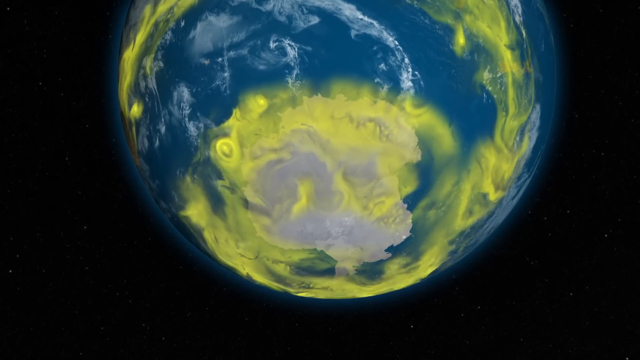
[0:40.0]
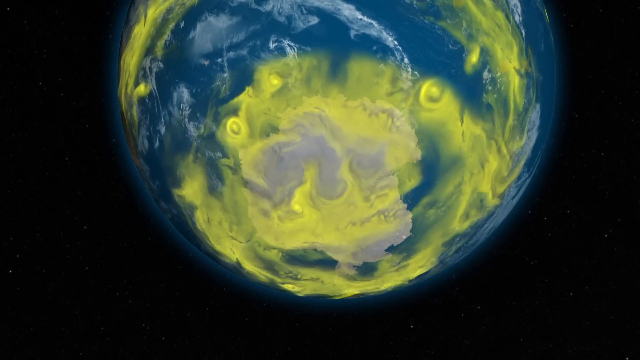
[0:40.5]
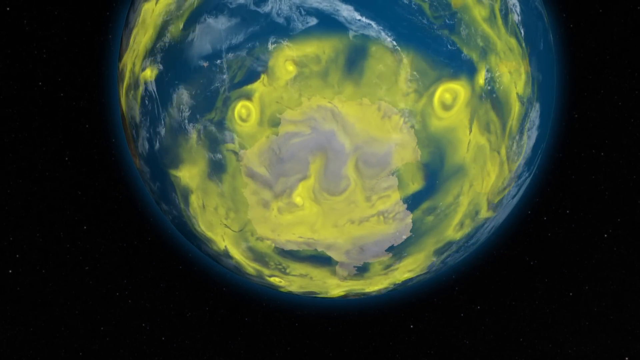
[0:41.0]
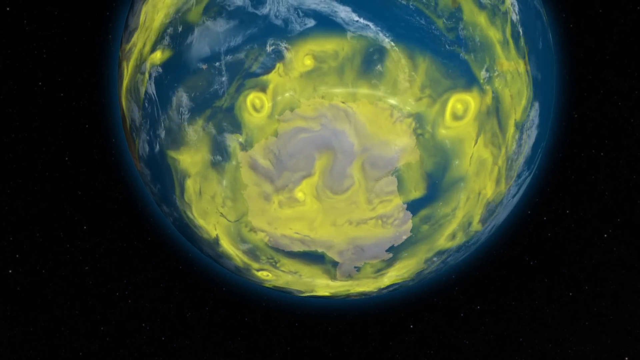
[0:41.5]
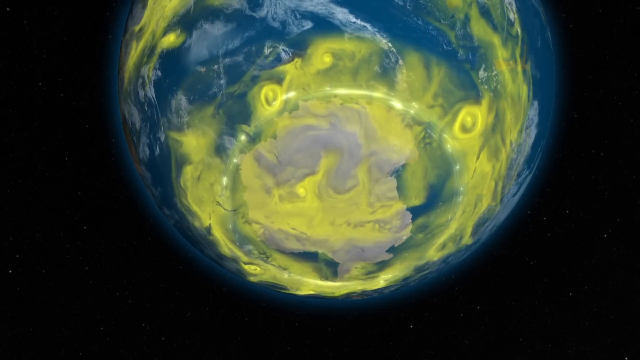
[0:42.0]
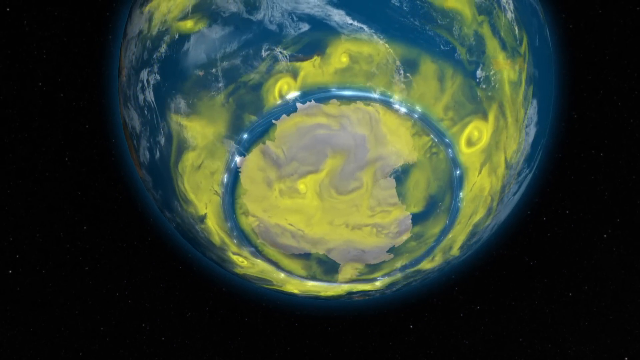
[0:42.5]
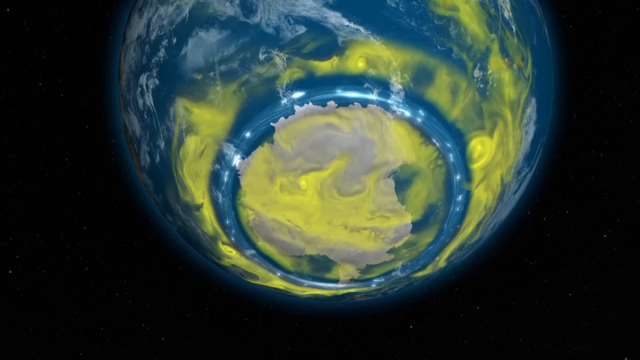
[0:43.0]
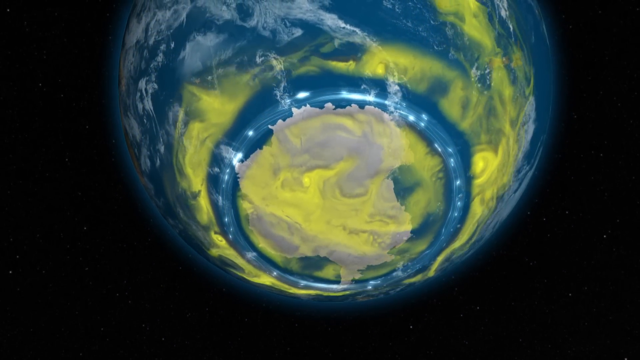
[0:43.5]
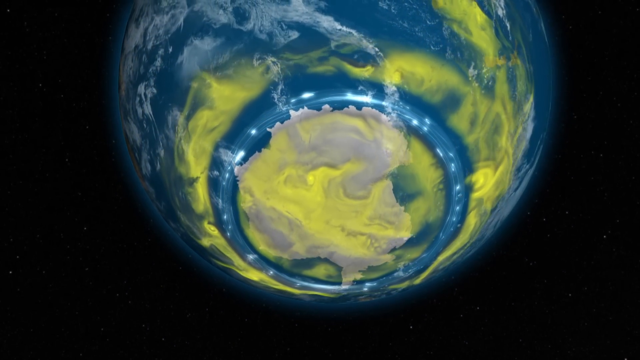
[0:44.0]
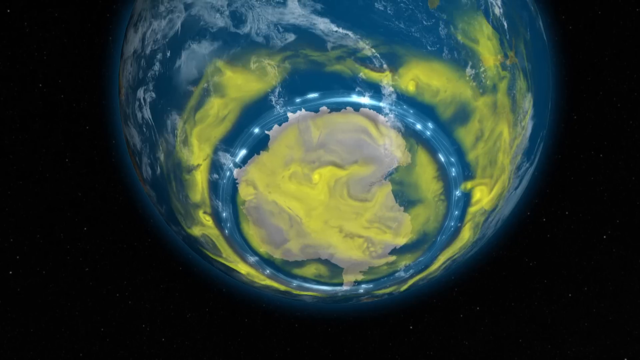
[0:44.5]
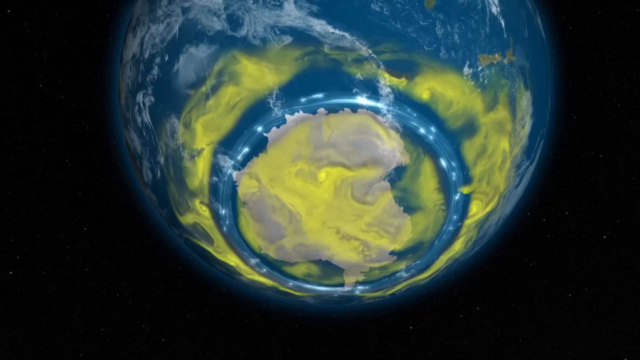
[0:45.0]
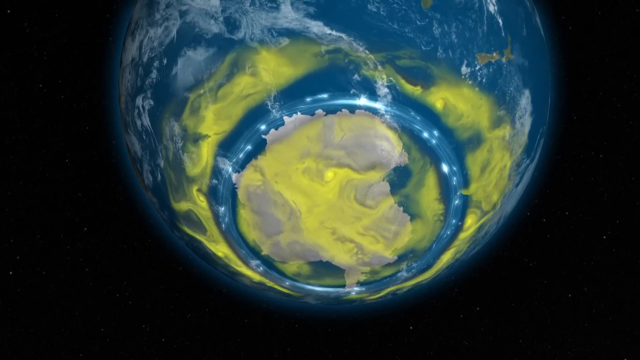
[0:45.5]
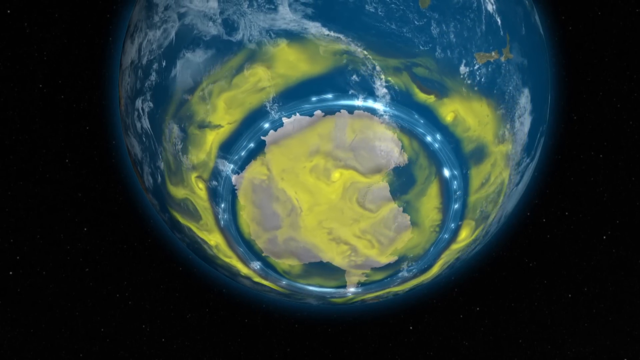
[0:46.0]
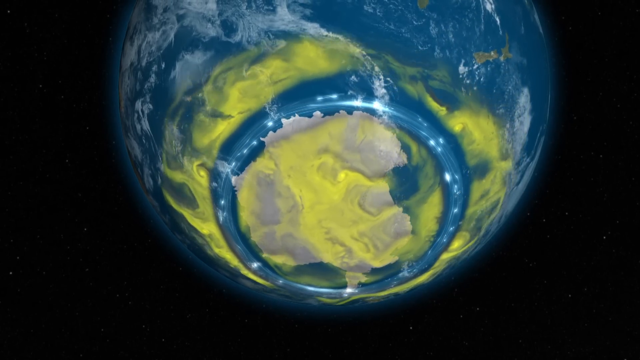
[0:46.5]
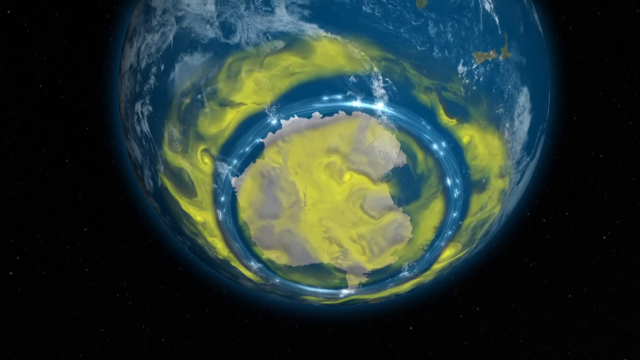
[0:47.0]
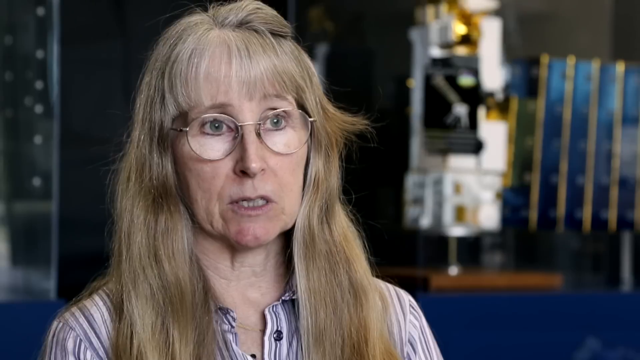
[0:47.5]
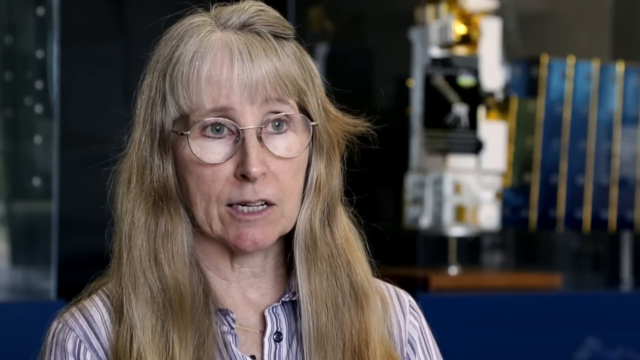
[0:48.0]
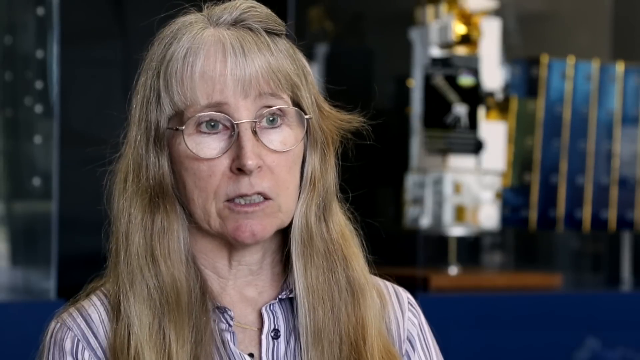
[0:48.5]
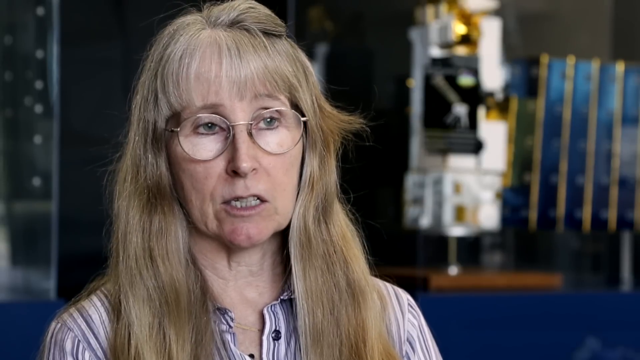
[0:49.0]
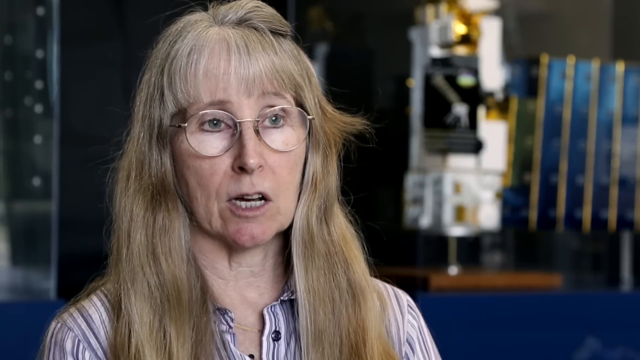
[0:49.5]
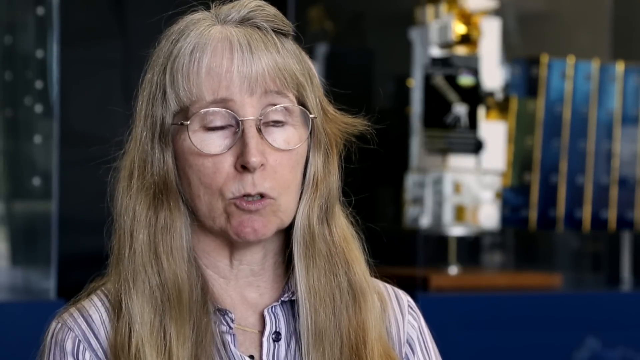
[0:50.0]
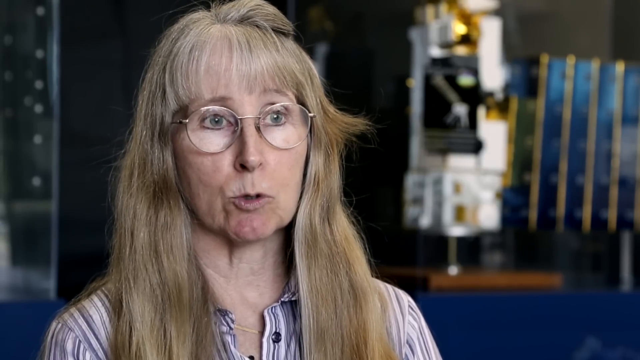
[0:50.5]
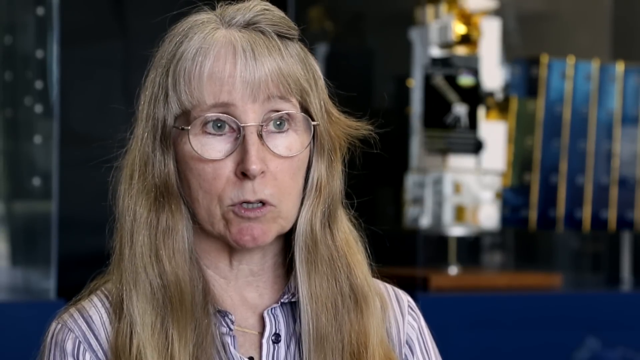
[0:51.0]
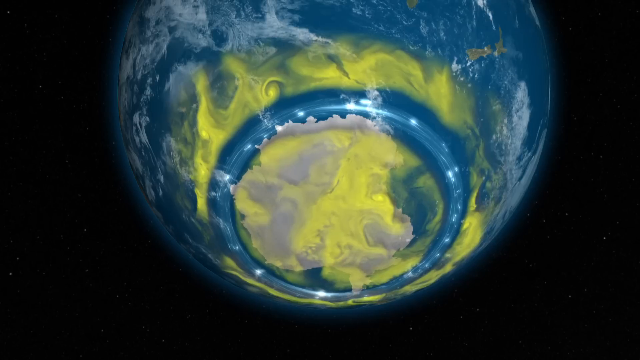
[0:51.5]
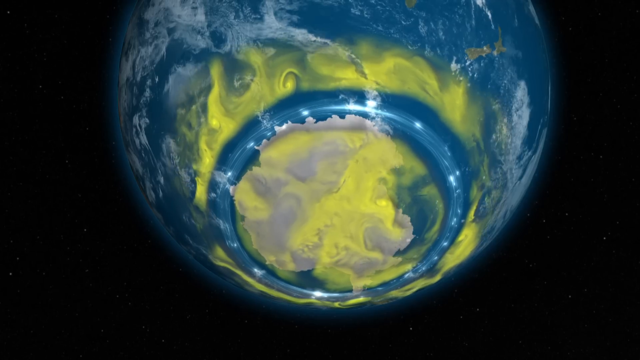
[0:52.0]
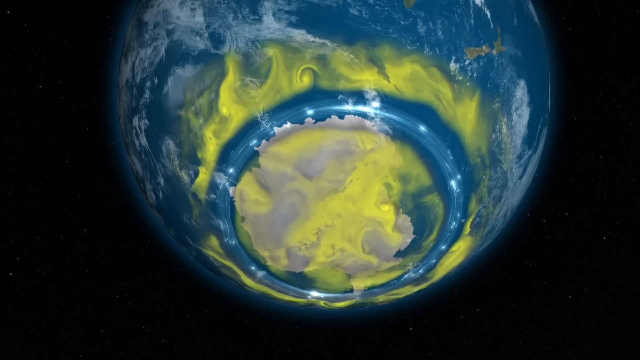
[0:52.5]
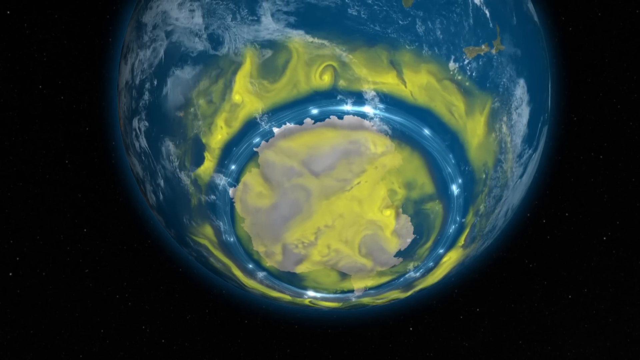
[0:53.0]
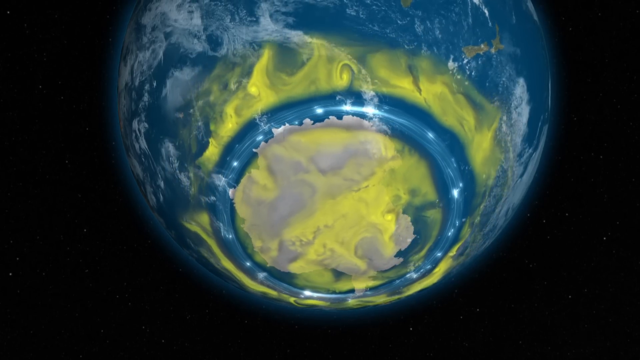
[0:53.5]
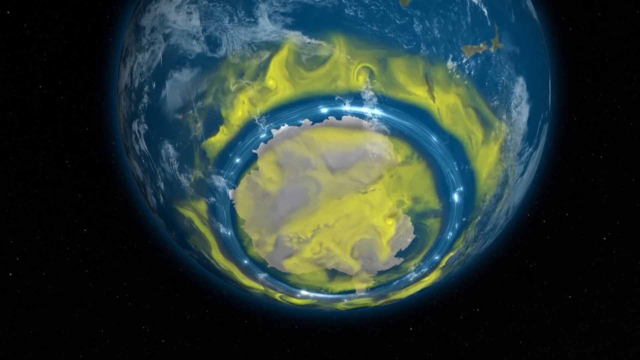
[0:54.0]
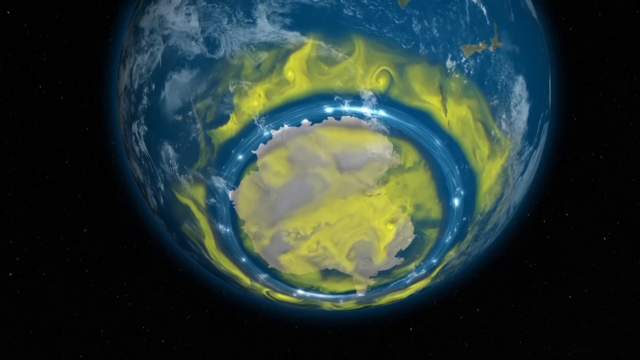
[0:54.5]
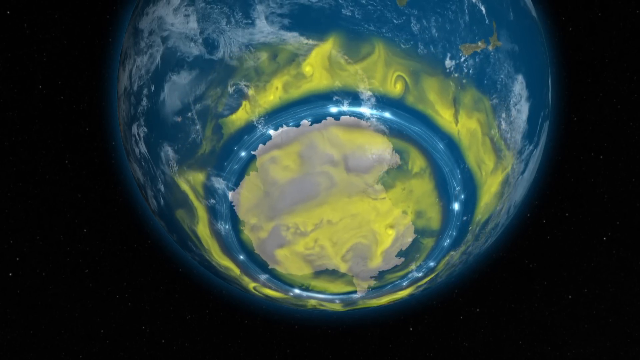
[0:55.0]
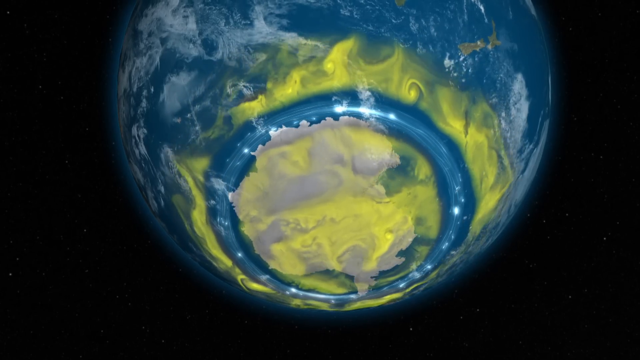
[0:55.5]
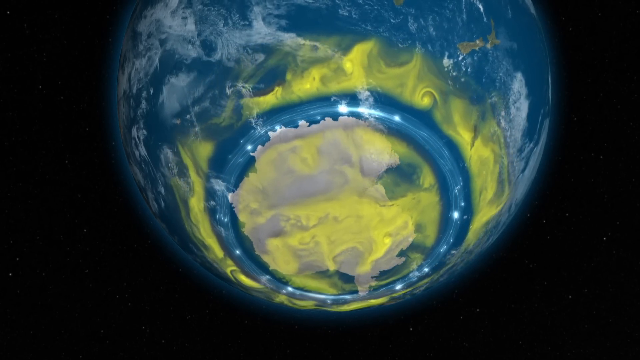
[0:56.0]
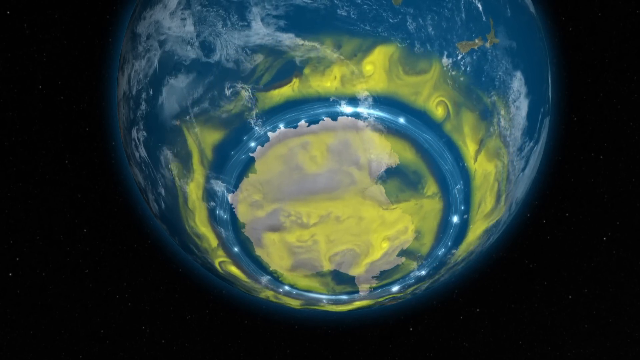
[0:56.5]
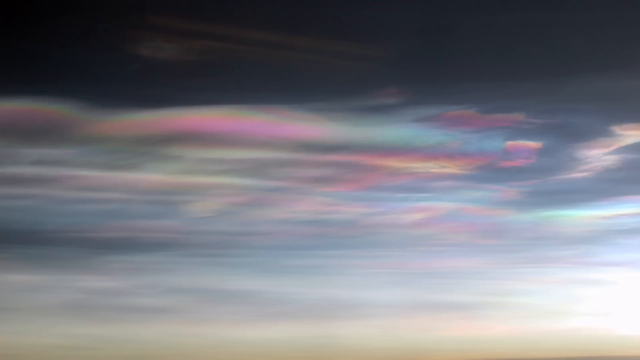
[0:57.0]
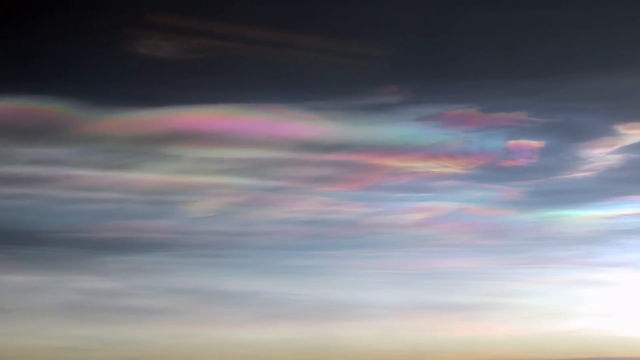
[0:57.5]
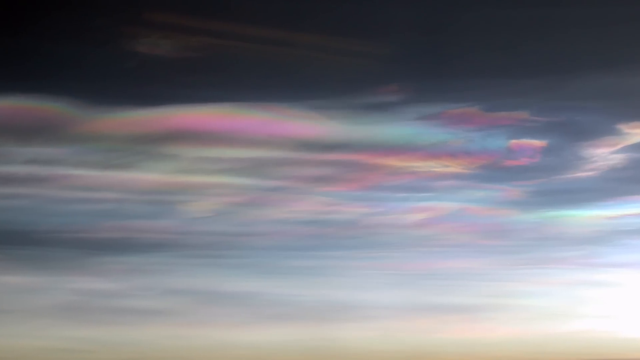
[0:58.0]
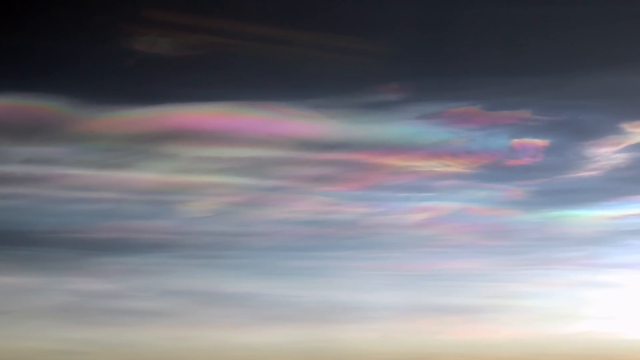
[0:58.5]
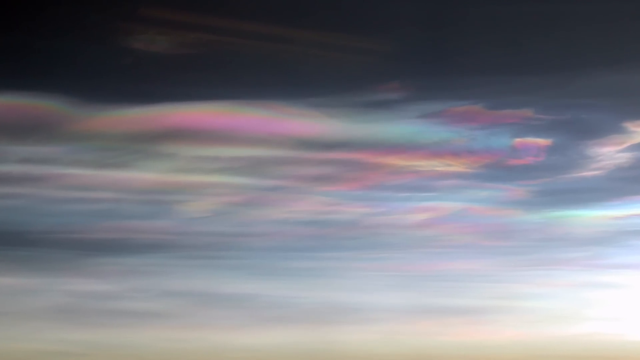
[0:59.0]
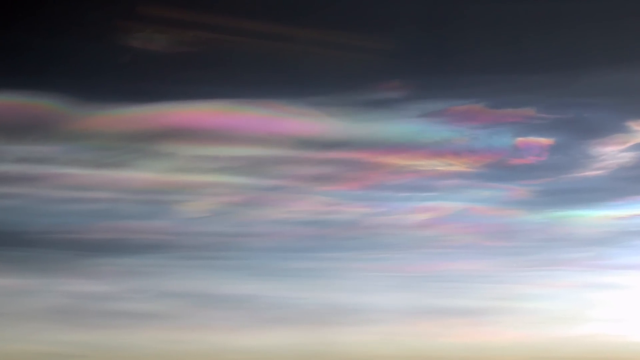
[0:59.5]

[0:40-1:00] A yellow swirling thing goes around Earth and covers most of the bottom, with some blue and white throughout. The yellow gradually covers more of Earth, then some of it recedes and more blue is exposed, leaving what looks like a center of yellow ringed by a circular line of just blue and white, while the upper half of Earth is just blue and white. A woman with long blonde hair and glasses talks to the camera, with a somewhat blurry room in the background. Footage of Earth returns, with the yellow swirling color going around it; the center at the bottom is filled with yellow, ringed by a circular line of mostly blue and white, and it continues to rotate. The scene then changes to iridescent skies, and the camera moves in to show different colors of pink, blue and yellow.